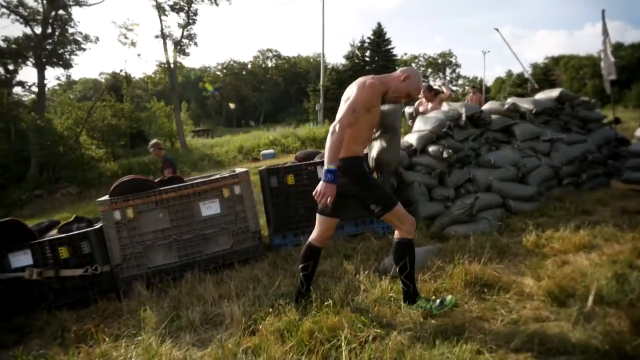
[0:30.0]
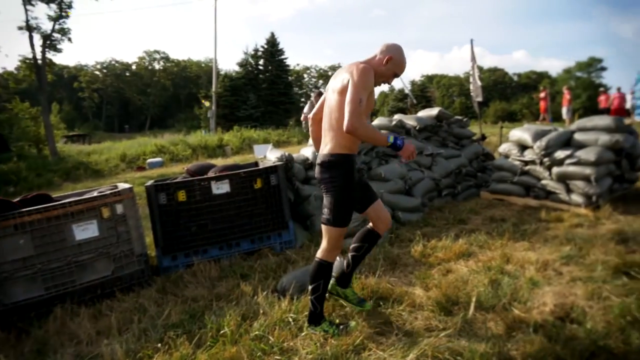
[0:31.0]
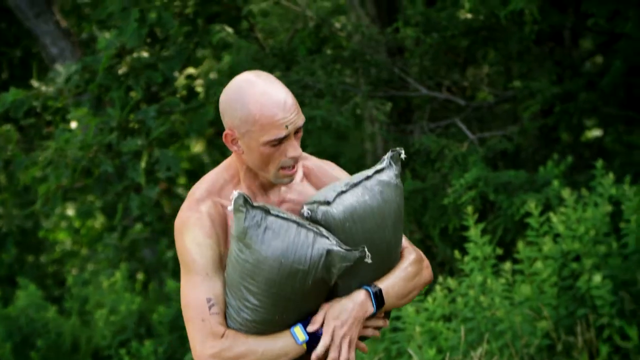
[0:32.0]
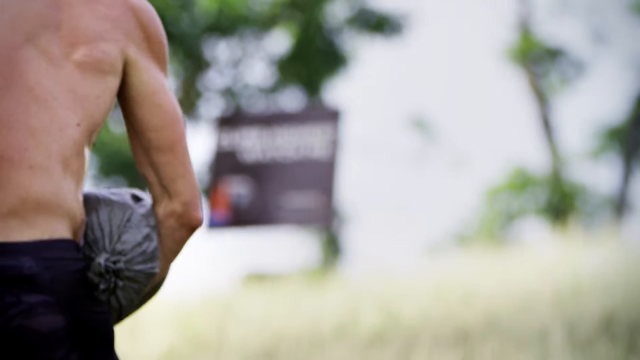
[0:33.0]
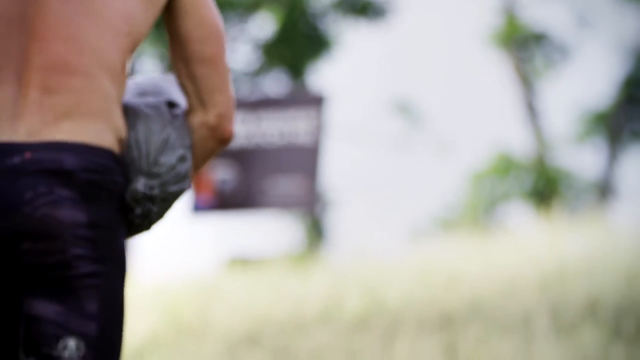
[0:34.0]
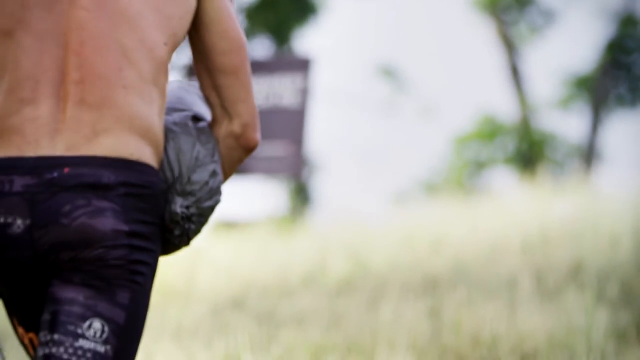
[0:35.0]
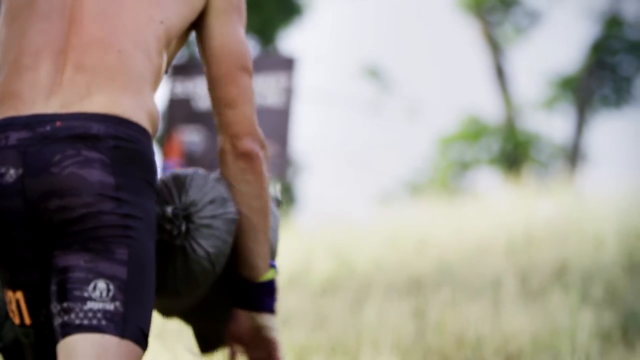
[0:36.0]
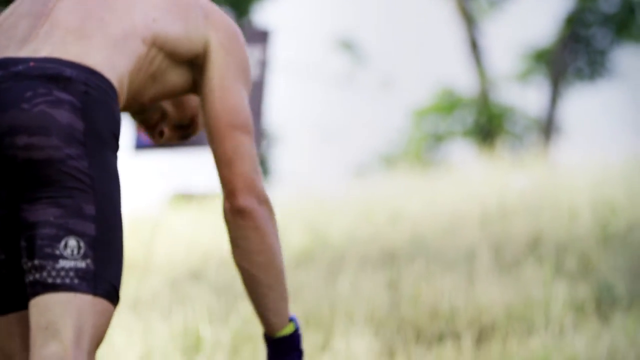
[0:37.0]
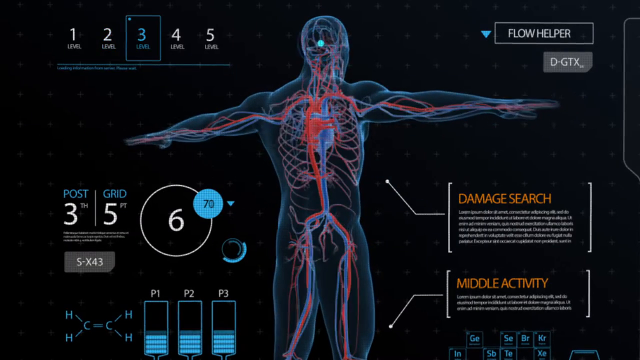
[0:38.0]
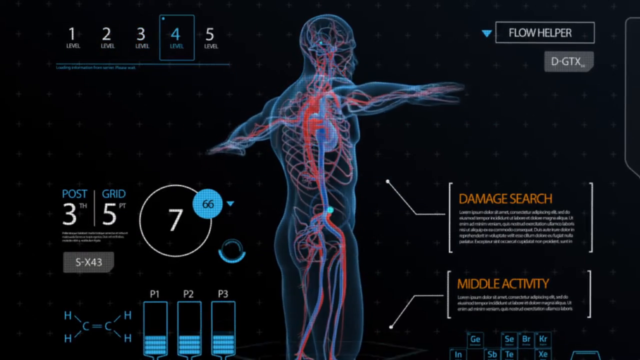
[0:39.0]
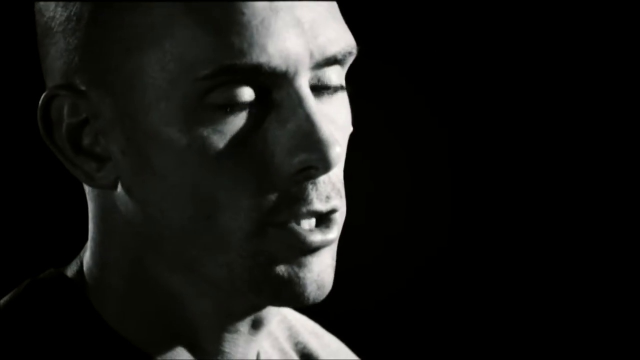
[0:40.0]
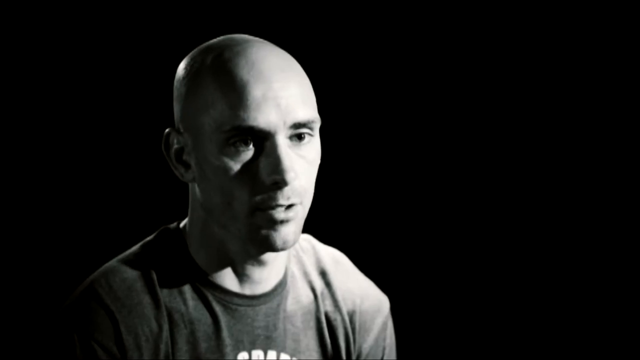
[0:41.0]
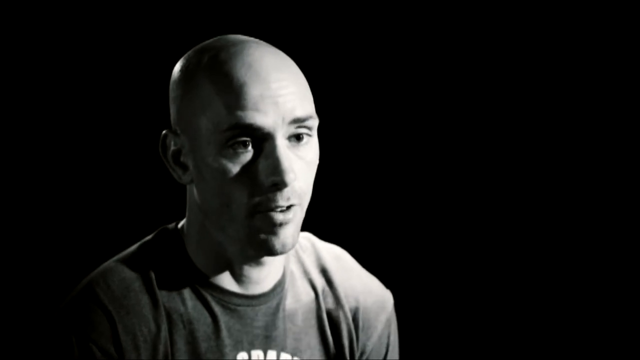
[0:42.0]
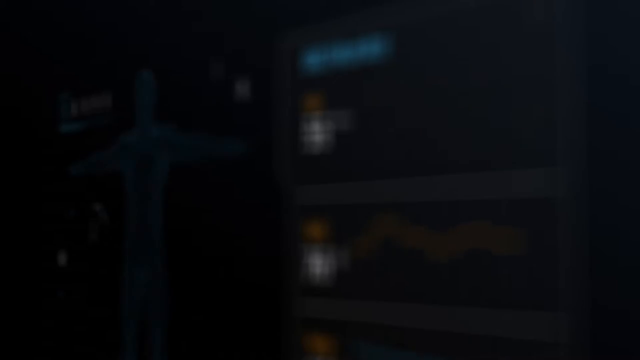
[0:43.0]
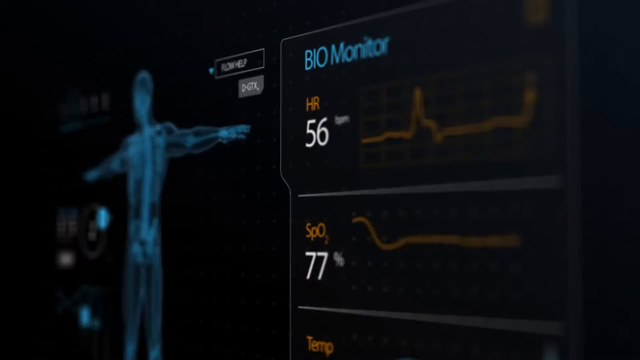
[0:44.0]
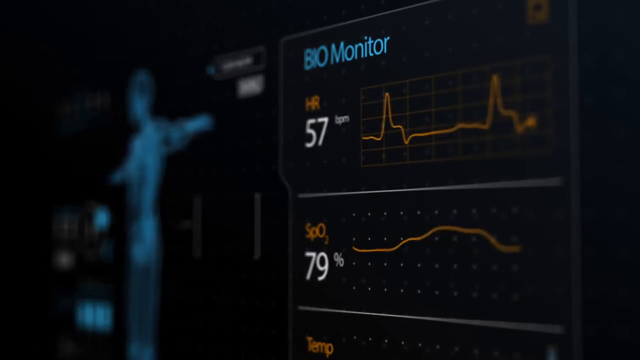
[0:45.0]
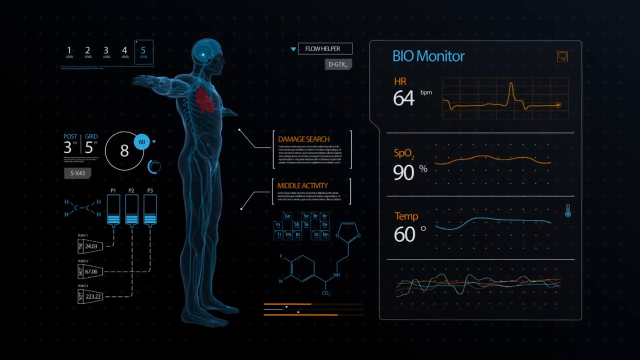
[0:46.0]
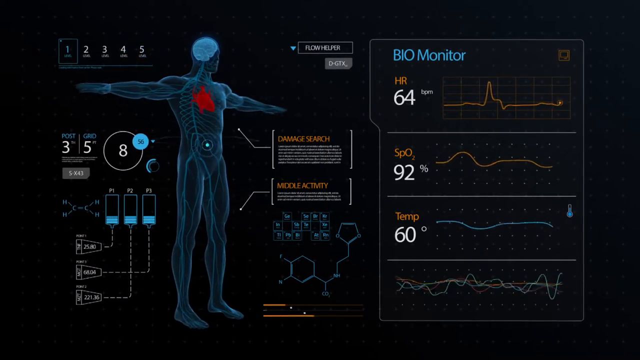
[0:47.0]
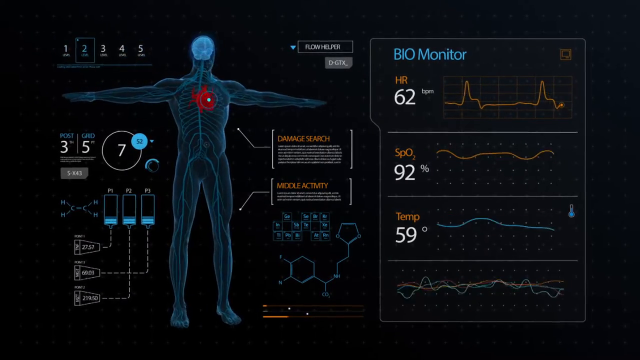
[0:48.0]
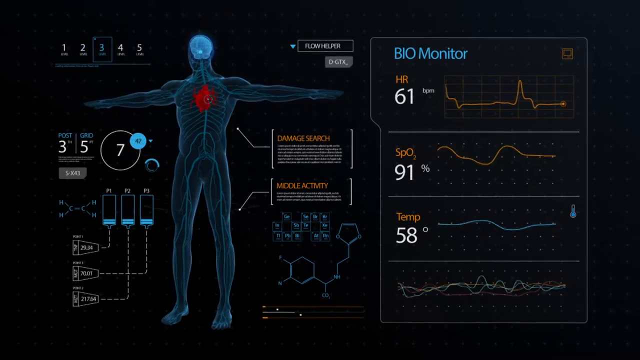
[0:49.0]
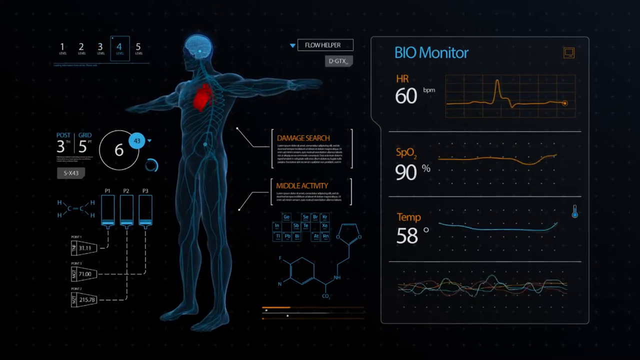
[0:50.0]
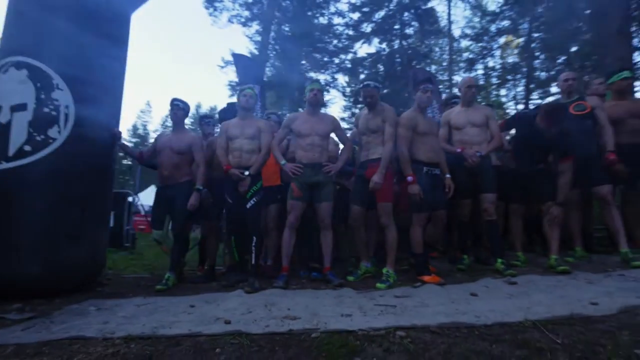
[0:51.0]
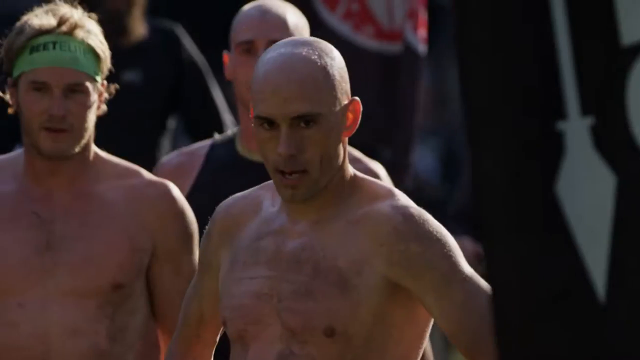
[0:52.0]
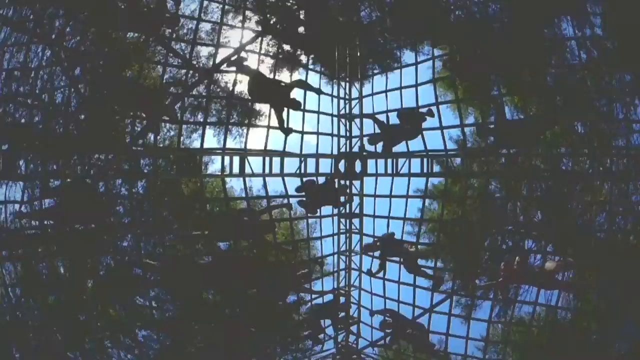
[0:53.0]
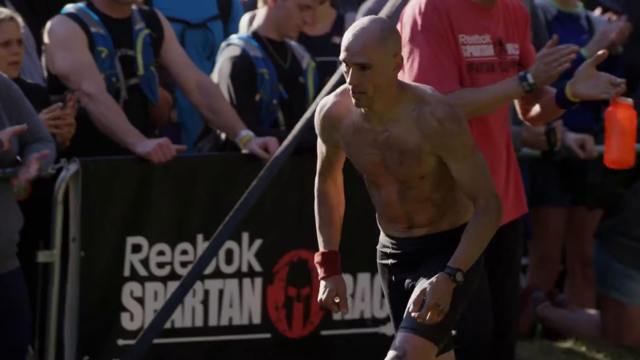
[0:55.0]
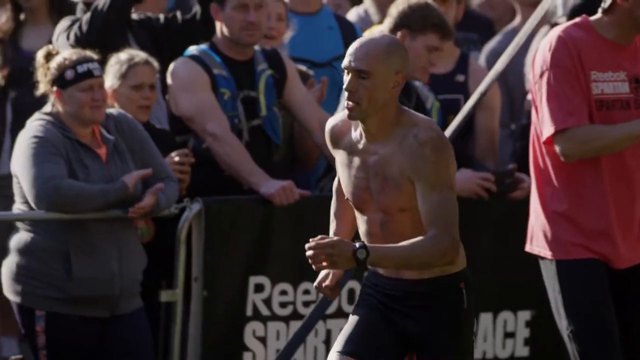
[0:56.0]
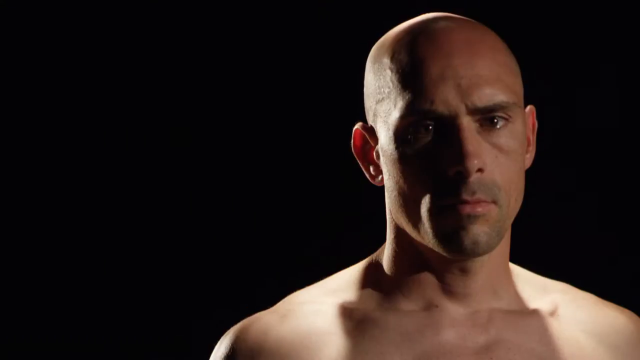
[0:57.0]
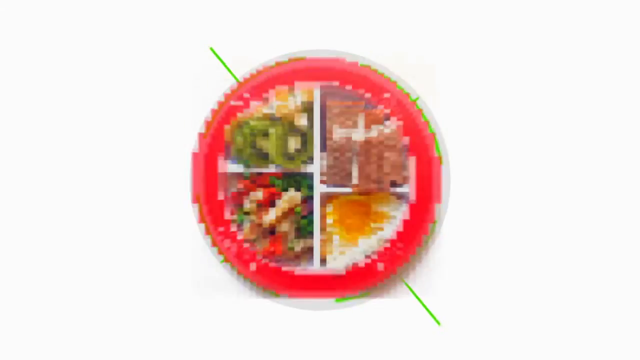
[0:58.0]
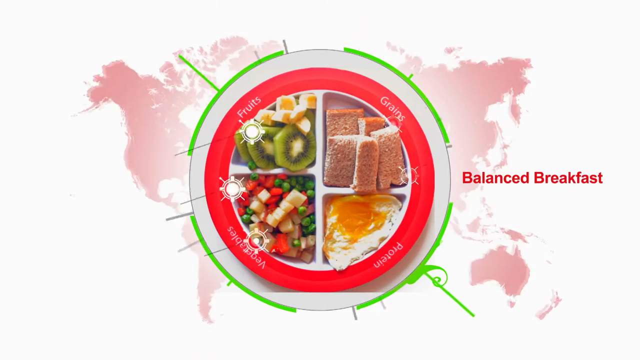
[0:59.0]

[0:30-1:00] A side view shows the racer walking left to right in slow motion with his head down, looking at the ground, with no shirt, black shorts and black socks. Trees and grass are in the background, along with what look like bundles of something layered up. From a different angle, seen from behind, he holds one of these bundles or bags and walks up what looks to be a slight incline, moving further and further away from the camera. The computerized screen showing his heart and vitals appears, then a close-up of his head as he is interviewed, then the computer screen again, with a computerized figure of a person with arms straight out, rotating almost left to right. Very quick snapshots of different parts of the race follow: runners or athletes going up and down a rope, and him running right to left in slow motion. A screen then shows a circle in the middle with food in it: fruits in the upper left quadrant, grains in the upper right, what could be proteins in the lower right, and vegetables in the lower left. To the right, red letters read "balanced breakfast," and black lines point toward different areas of the food with some descriptive text.